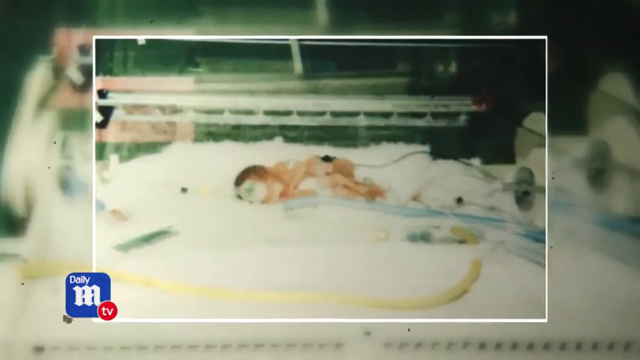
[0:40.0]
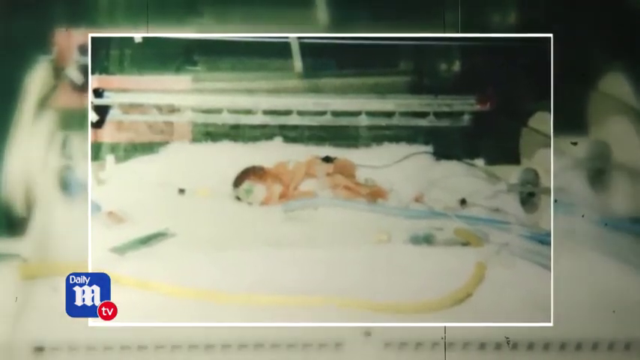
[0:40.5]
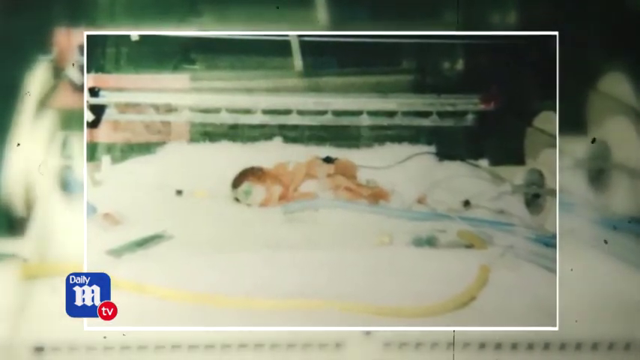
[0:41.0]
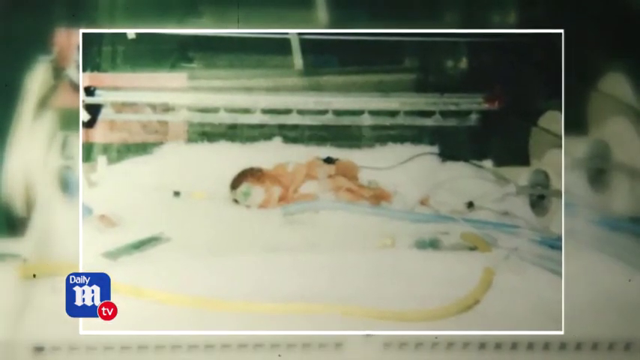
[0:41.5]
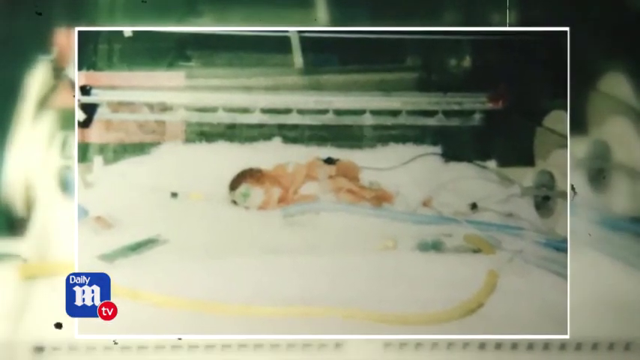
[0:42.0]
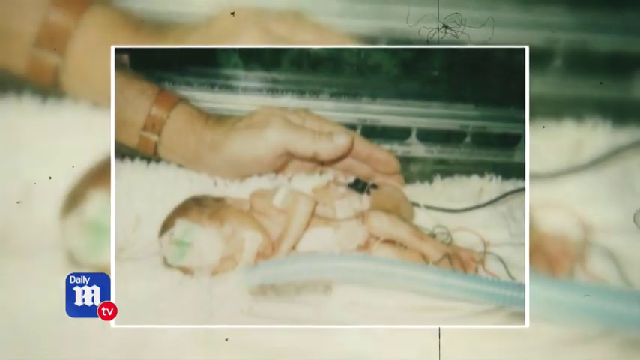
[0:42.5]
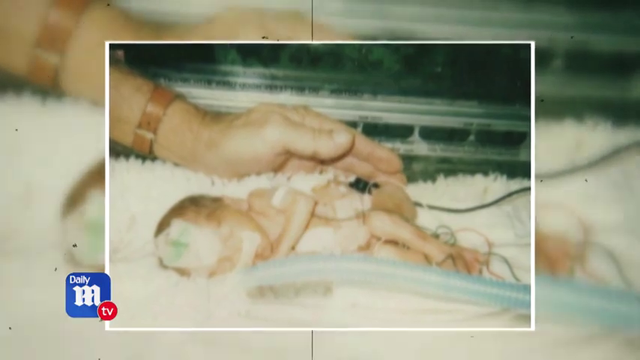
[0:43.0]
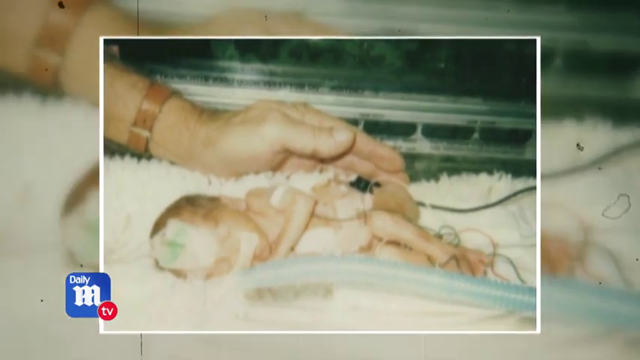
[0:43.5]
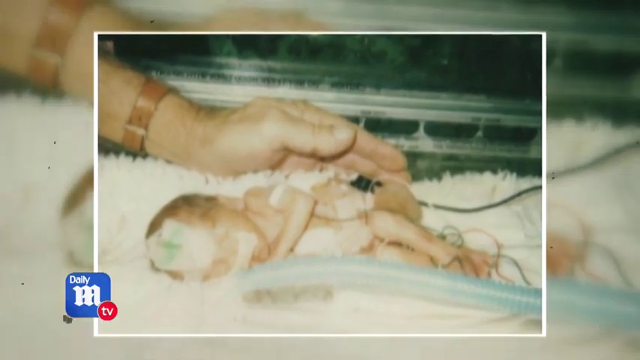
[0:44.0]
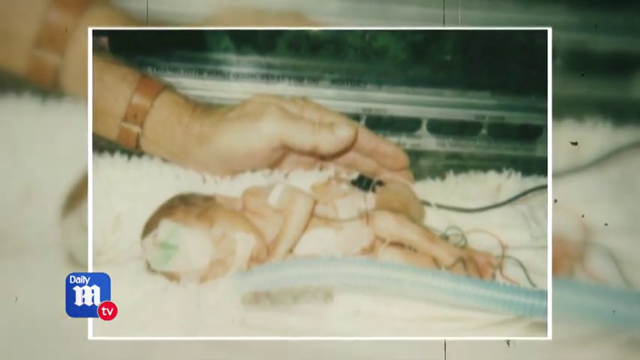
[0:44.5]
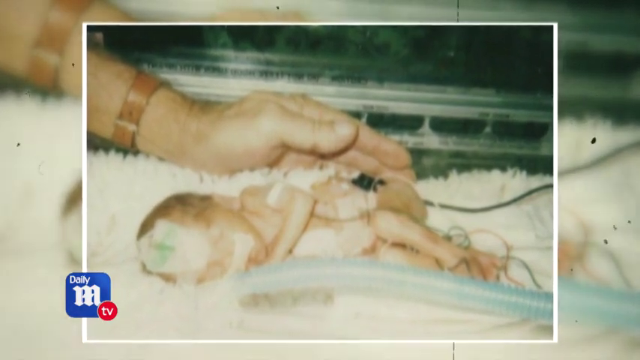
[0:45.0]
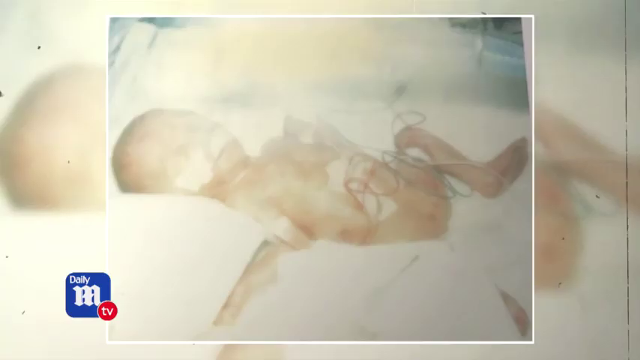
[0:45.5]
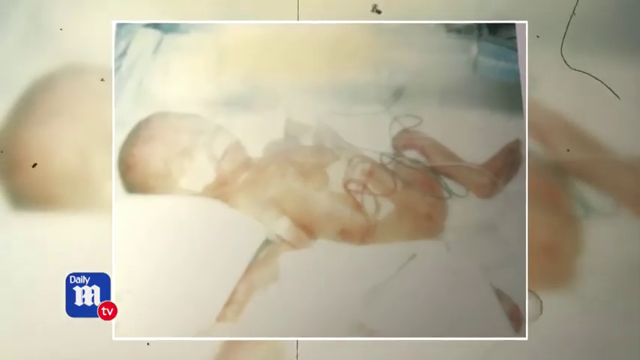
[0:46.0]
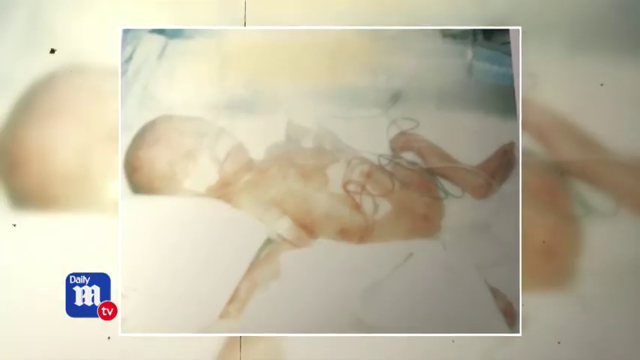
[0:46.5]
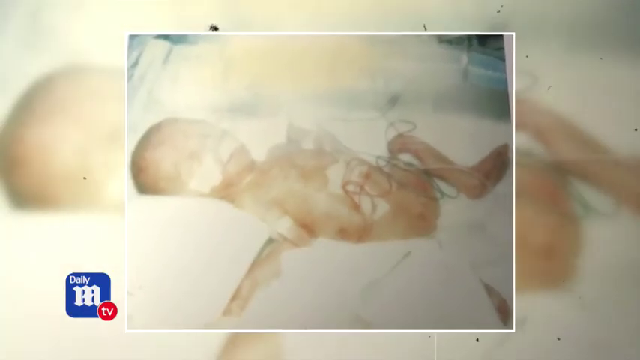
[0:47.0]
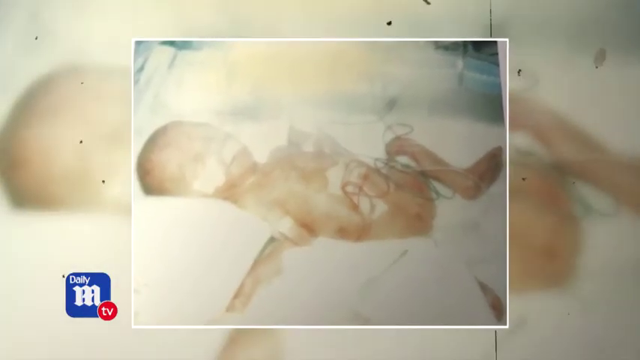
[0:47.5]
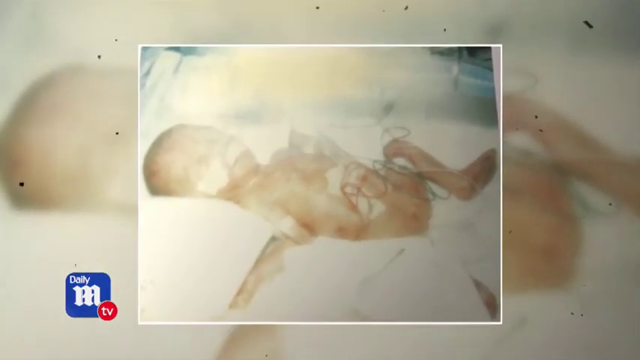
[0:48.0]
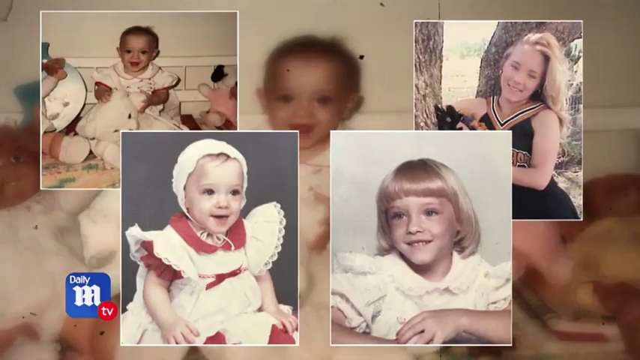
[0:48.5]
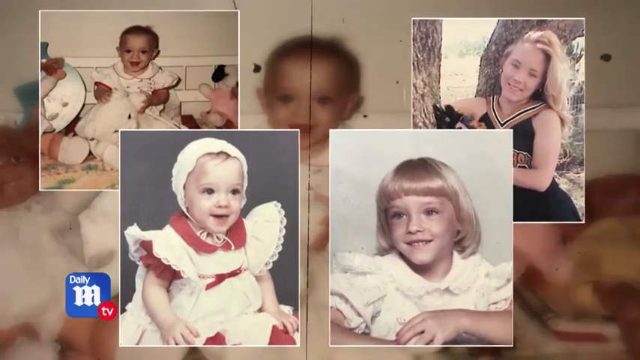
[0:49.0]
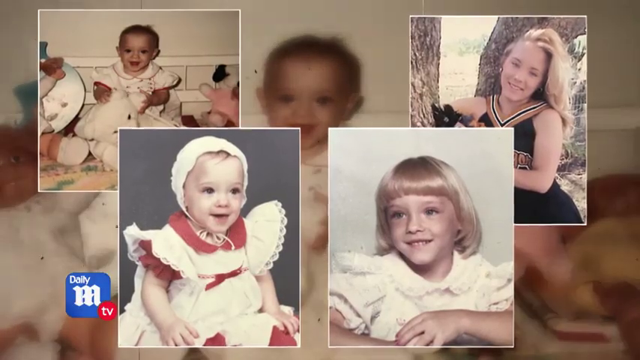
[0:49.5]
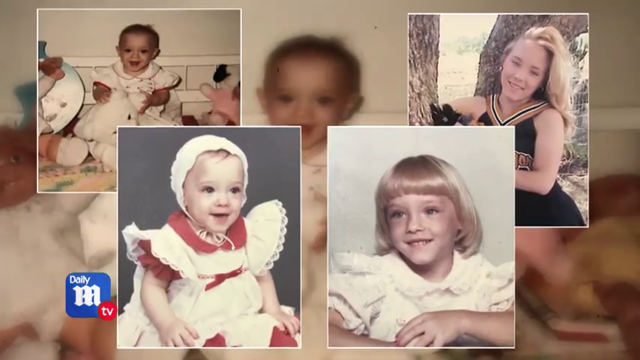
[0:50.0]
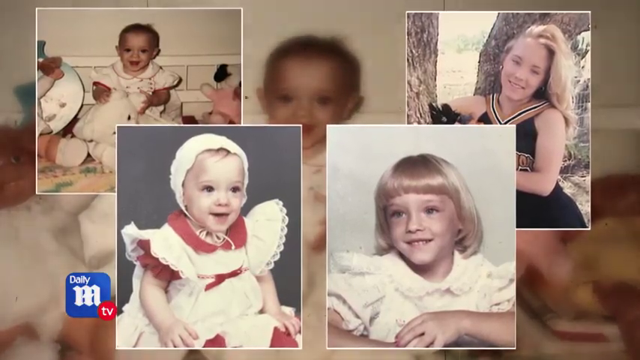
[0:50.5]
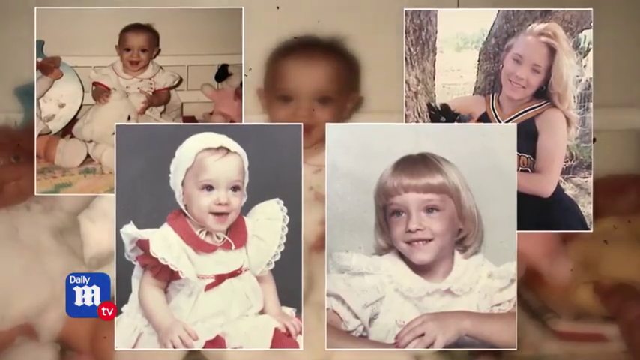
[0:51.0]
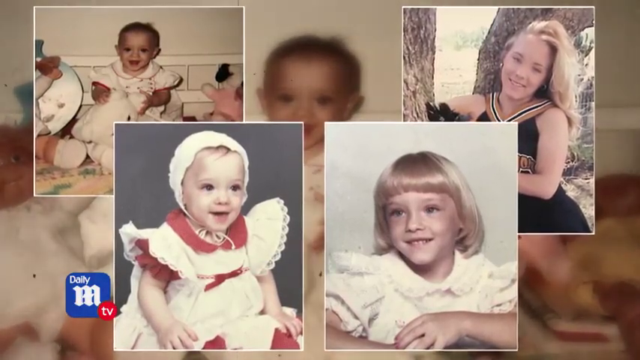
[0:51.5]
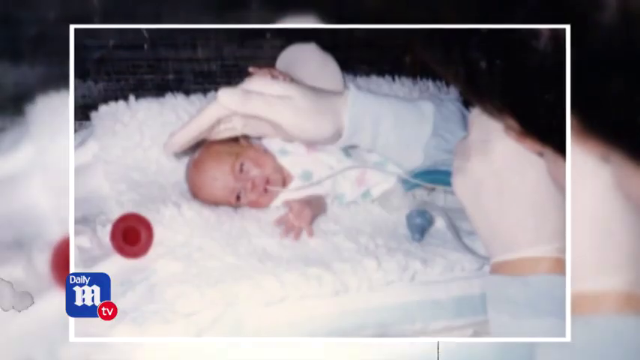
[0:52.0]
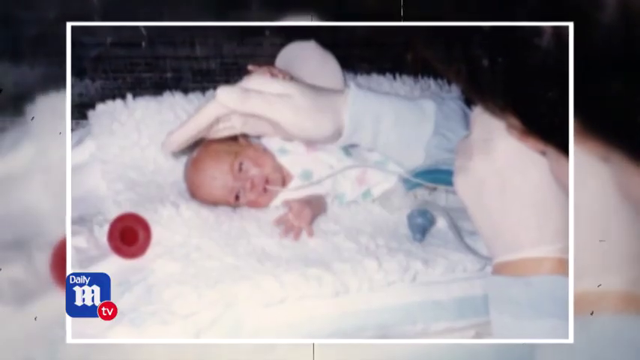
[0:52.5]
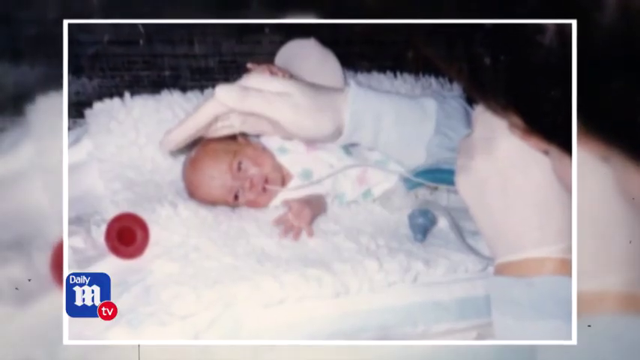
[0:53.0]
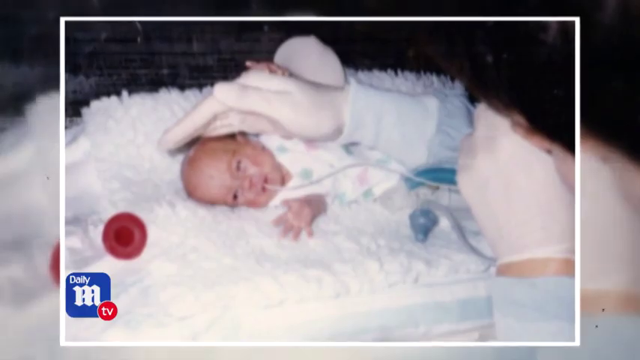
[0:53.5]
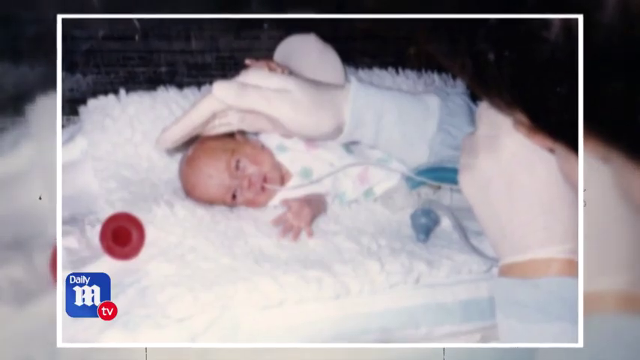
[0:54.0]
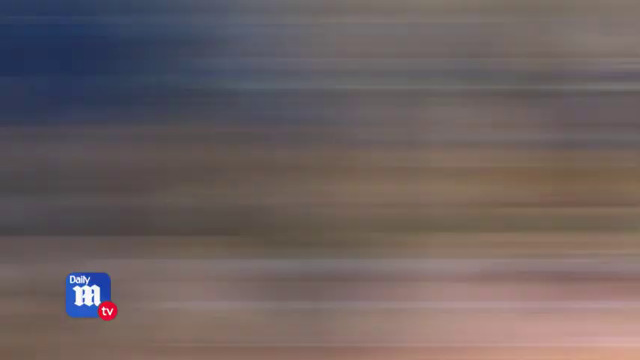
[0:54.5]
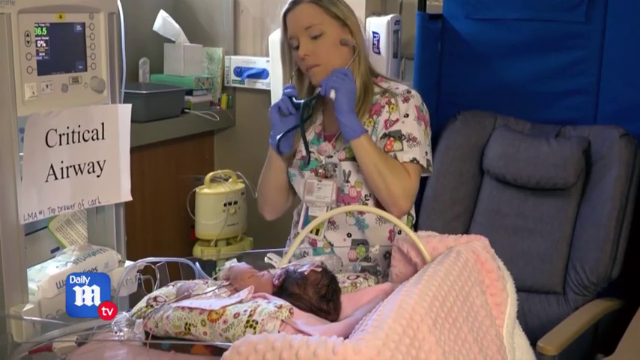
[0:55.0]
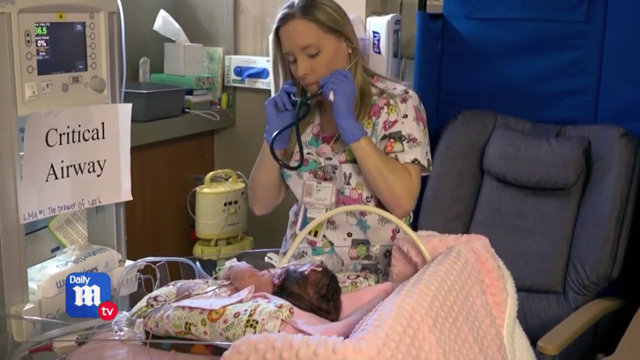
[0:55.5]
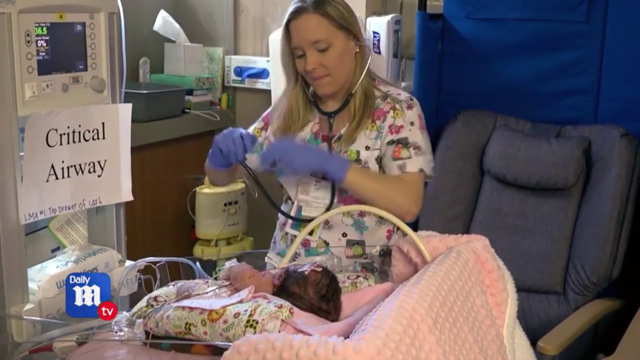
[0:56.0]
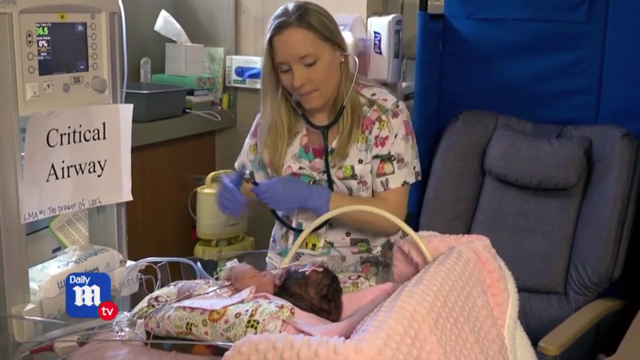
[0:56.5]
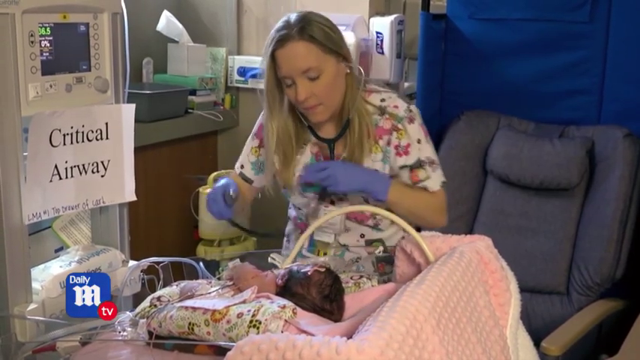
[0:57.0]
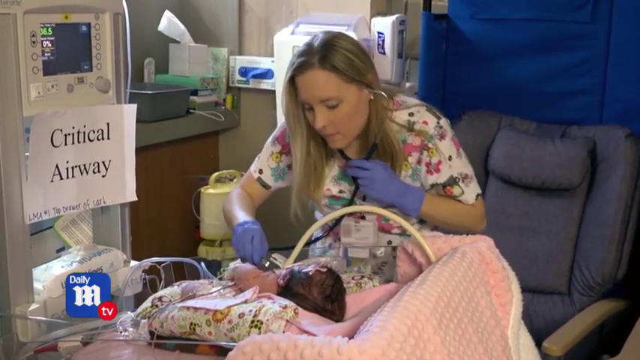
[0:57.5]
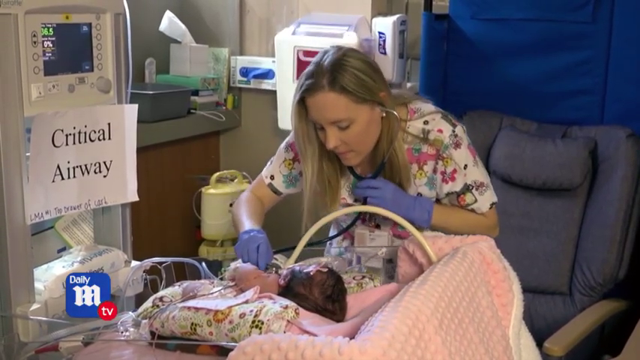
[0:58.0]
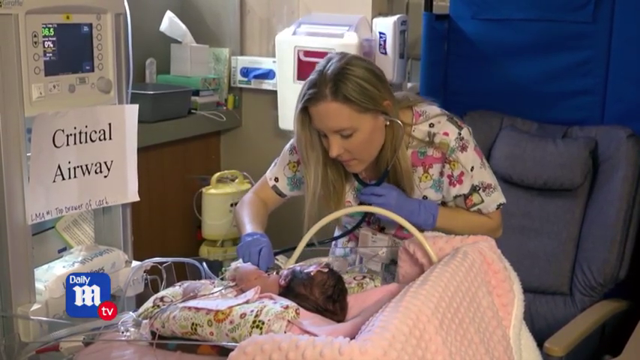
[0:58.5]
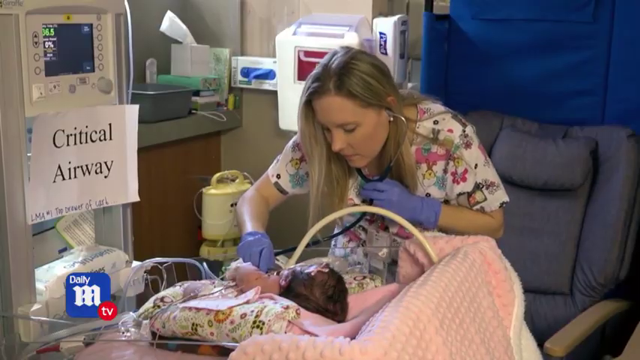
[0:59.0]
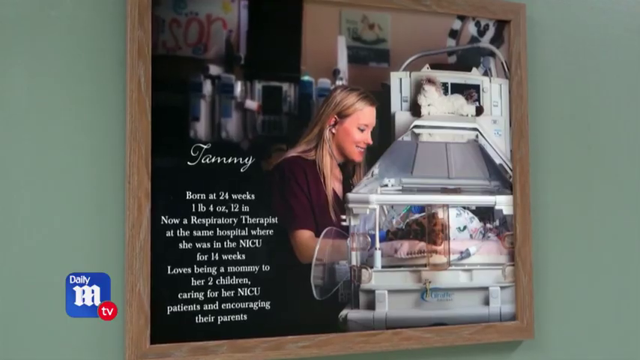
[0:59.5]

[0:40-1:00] Images show Tammy in a hospital bed with tubes connected to her; she seems to be a very tiny baby lying on top of the bed. As the image zooms in, she is the size of a hand: a hand wearing a brown watch is behind her. Photographs from different stages of her life follow: one of her playing with toys; one of her in a white and red maid outfit with a covering on her head; one of her smiling with a blonde bob and fringe and a white t-shirt; and one in the top right corner of her in a cheerleading outfit with her blonde hair, in which she seems to be carrying a dog on her head.